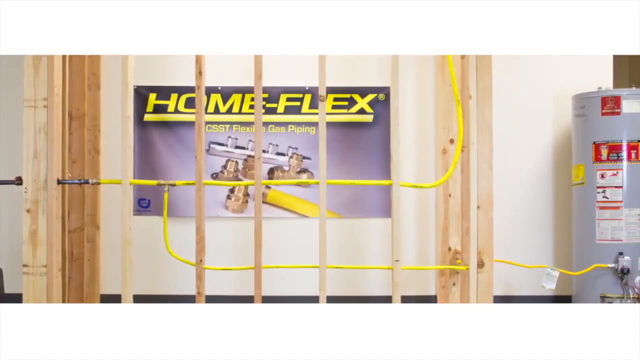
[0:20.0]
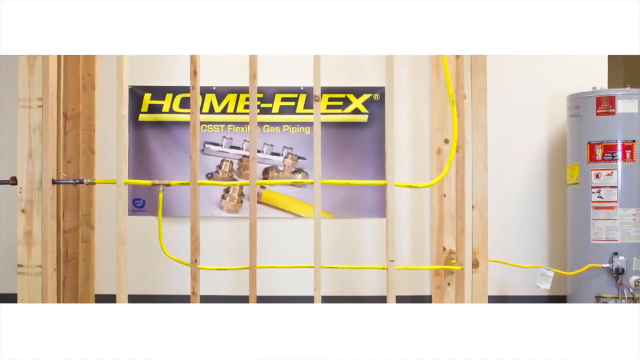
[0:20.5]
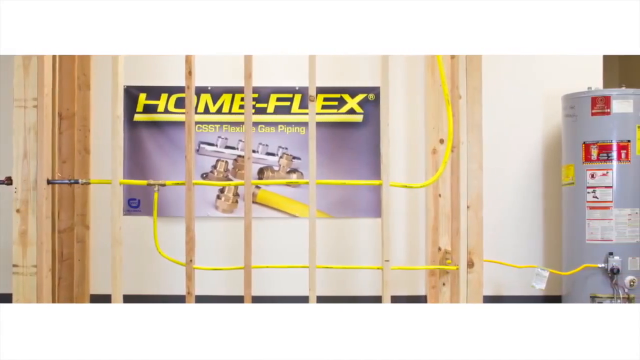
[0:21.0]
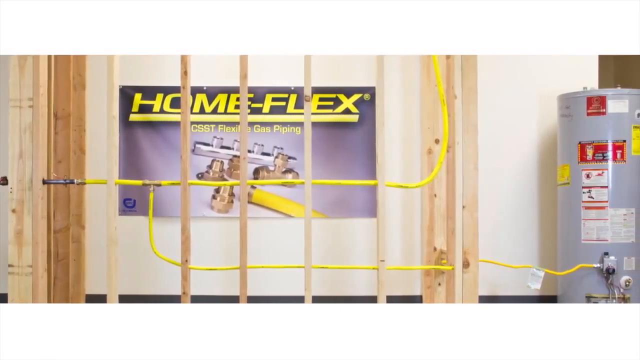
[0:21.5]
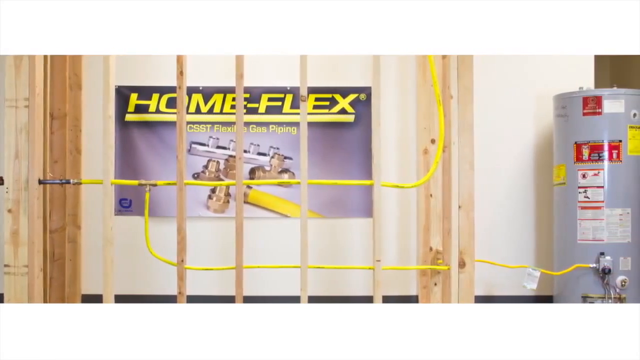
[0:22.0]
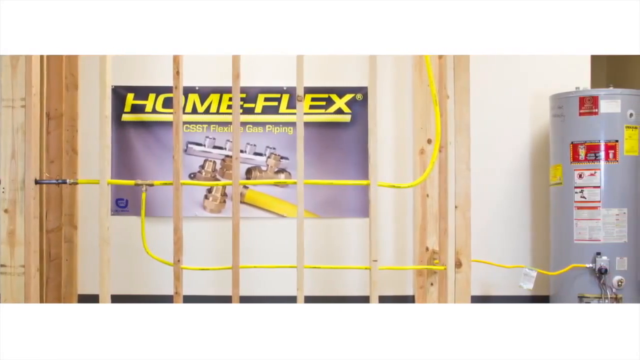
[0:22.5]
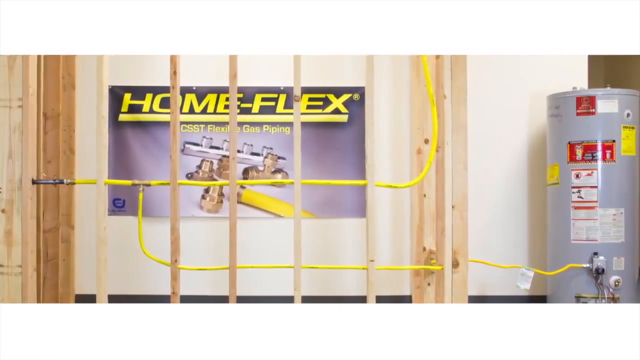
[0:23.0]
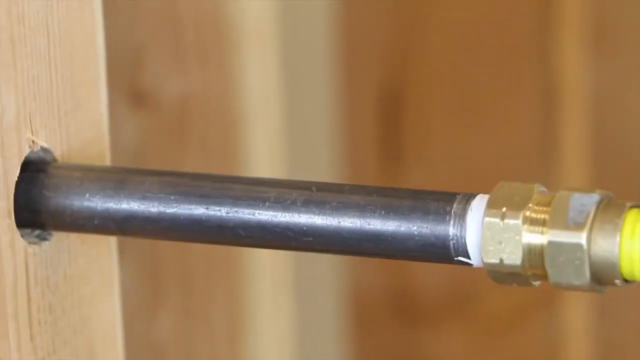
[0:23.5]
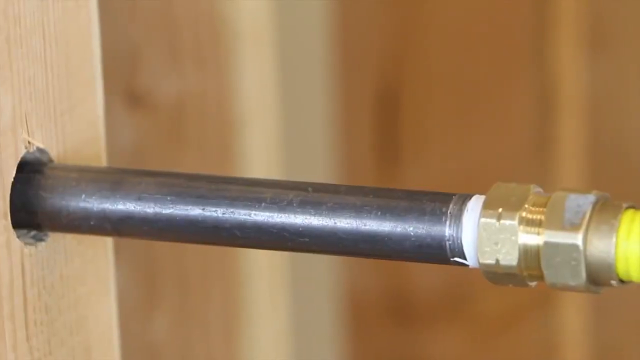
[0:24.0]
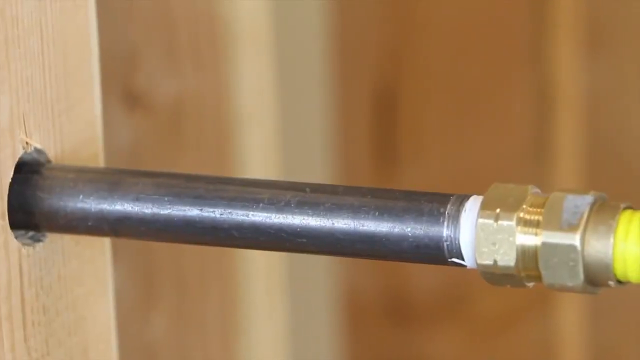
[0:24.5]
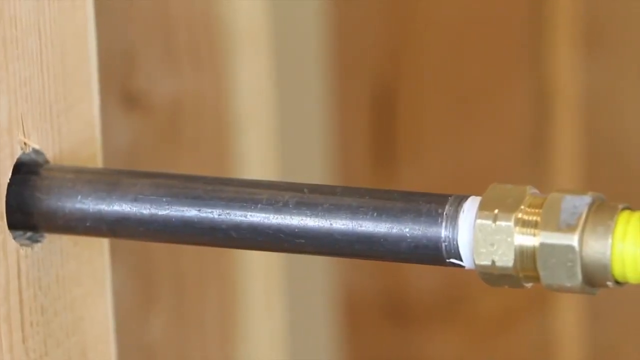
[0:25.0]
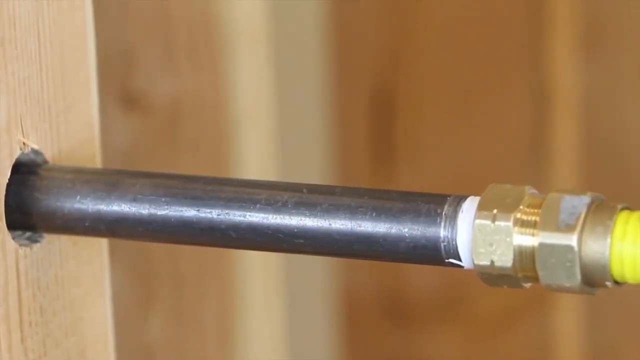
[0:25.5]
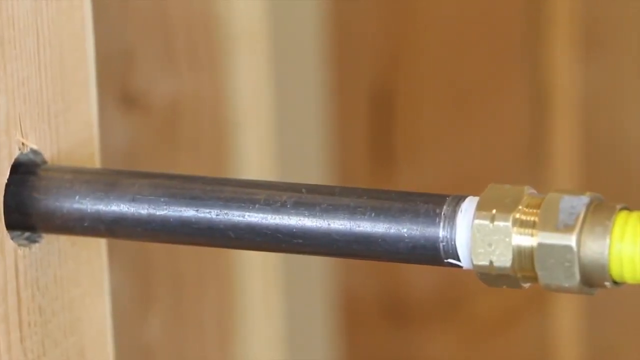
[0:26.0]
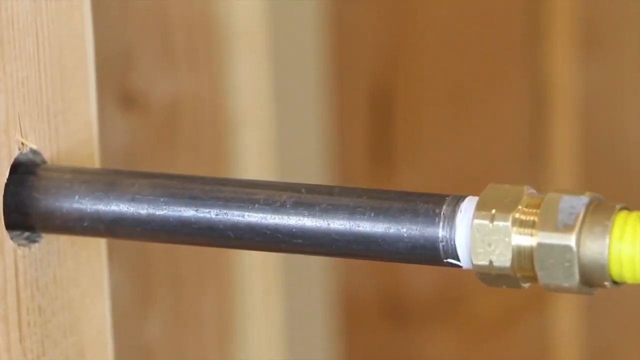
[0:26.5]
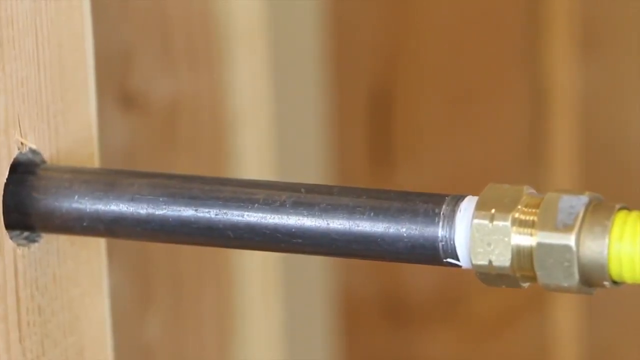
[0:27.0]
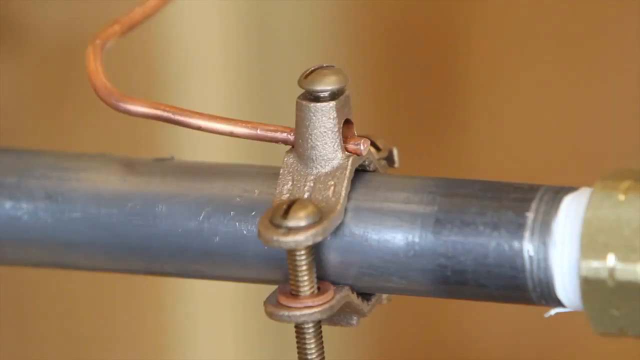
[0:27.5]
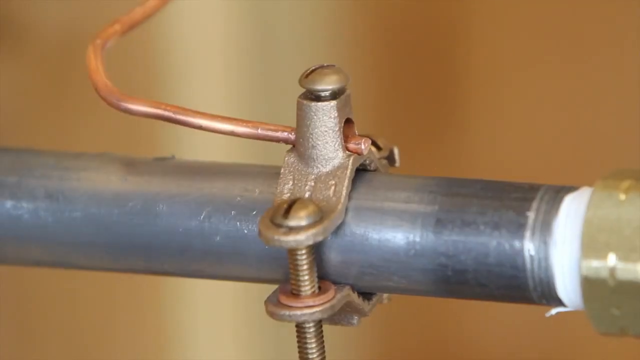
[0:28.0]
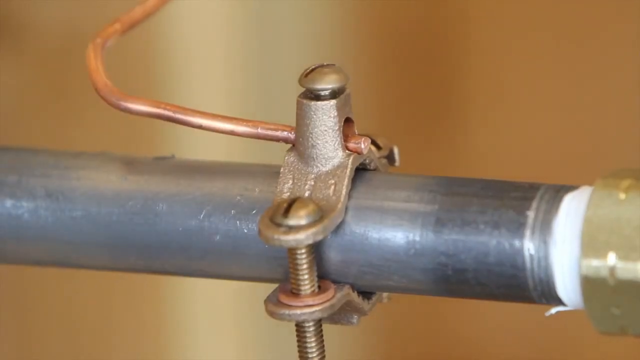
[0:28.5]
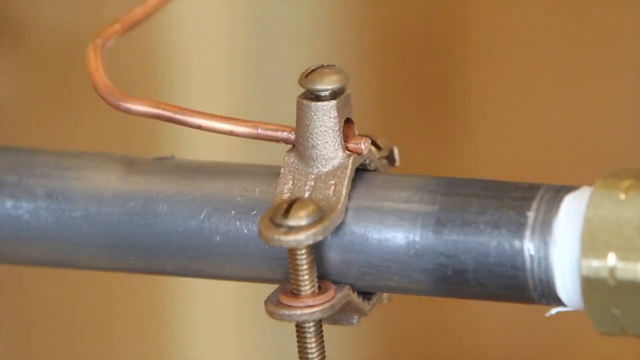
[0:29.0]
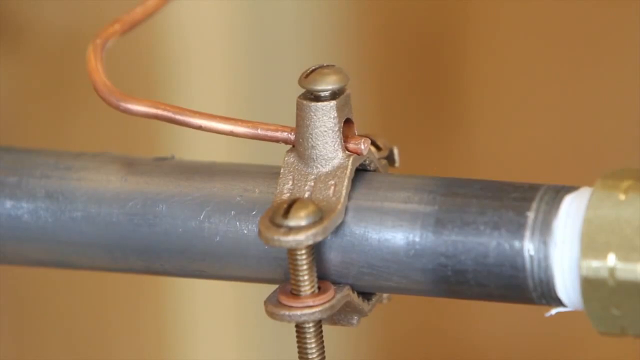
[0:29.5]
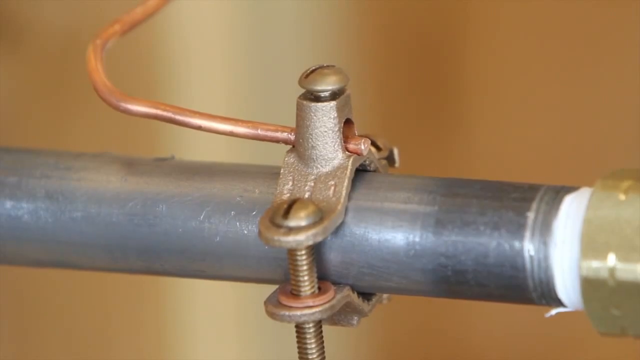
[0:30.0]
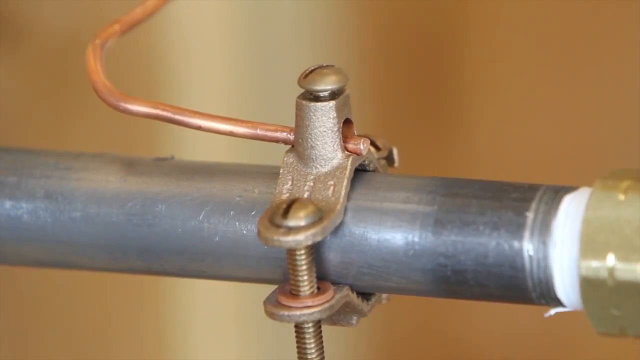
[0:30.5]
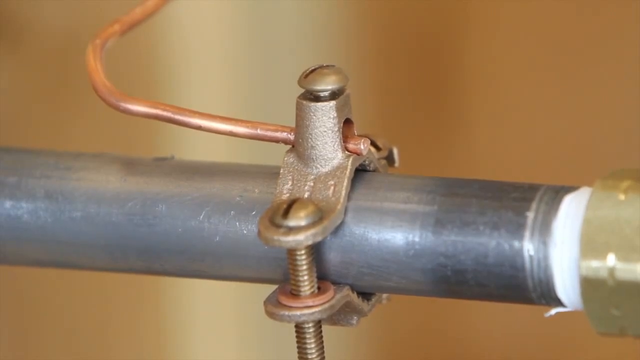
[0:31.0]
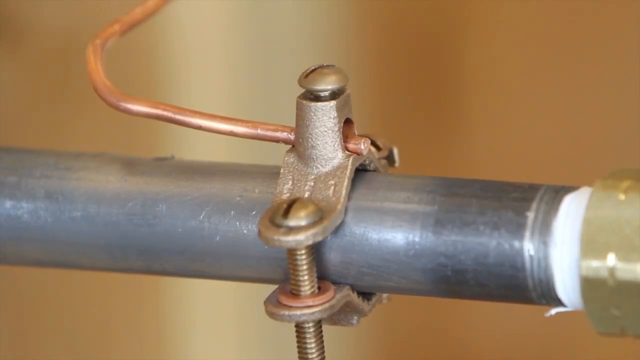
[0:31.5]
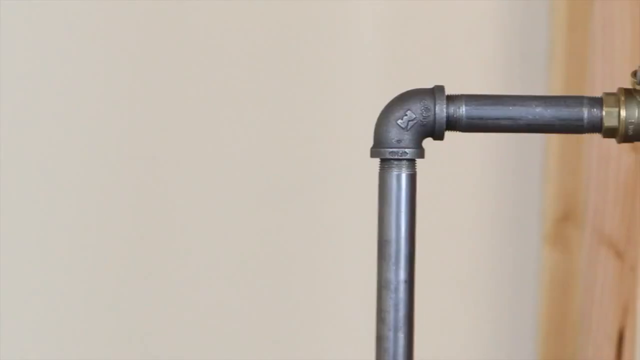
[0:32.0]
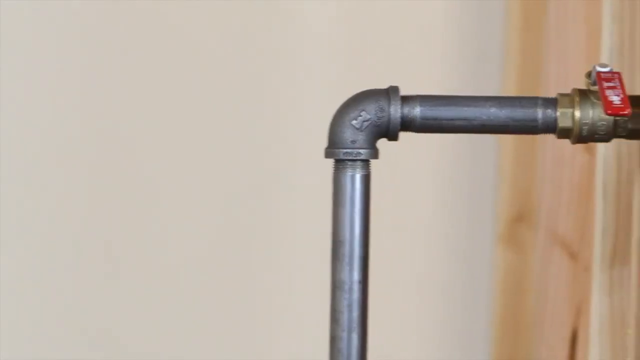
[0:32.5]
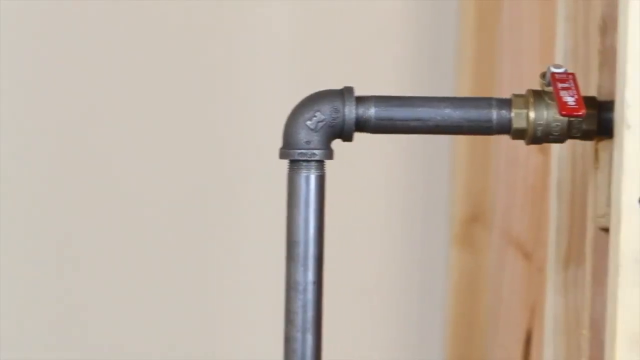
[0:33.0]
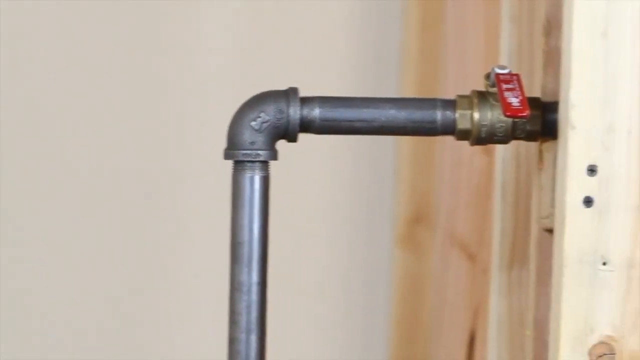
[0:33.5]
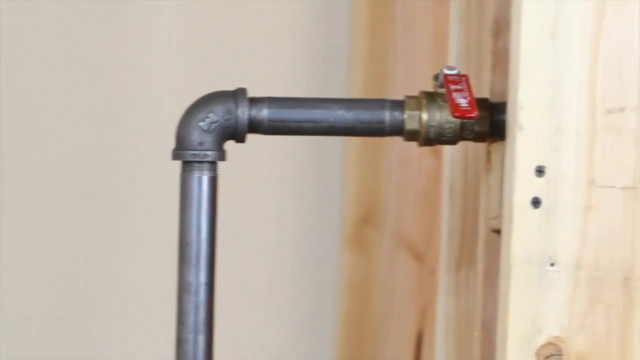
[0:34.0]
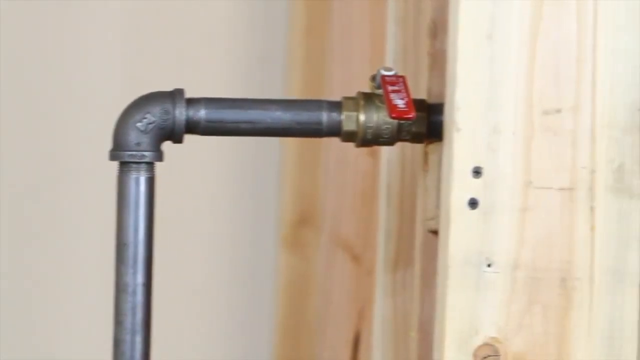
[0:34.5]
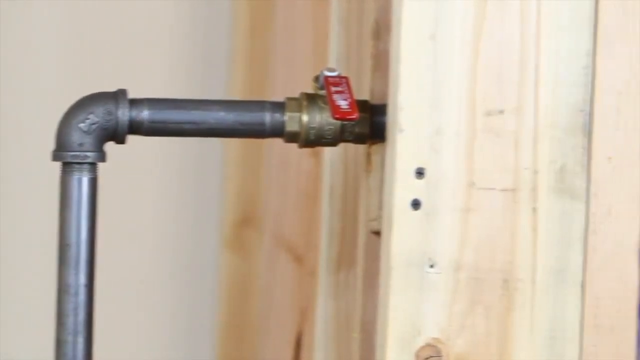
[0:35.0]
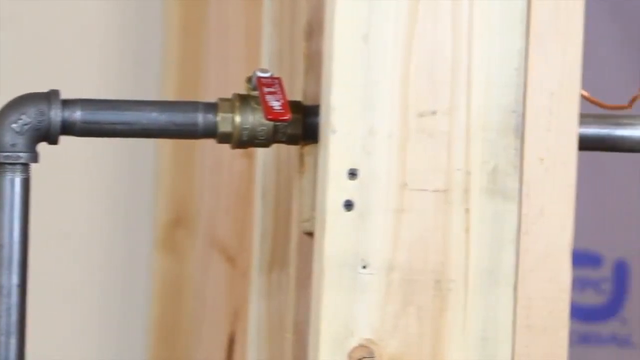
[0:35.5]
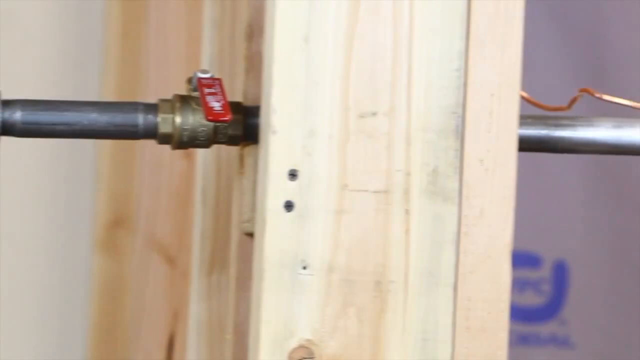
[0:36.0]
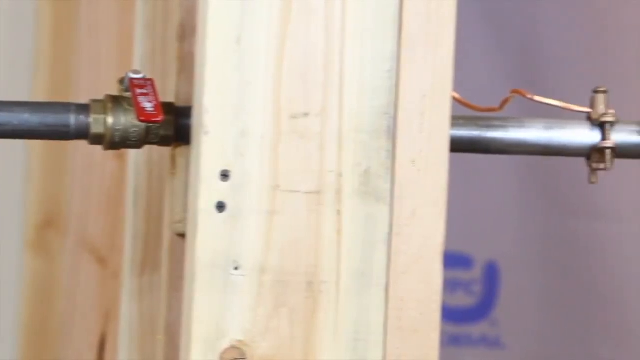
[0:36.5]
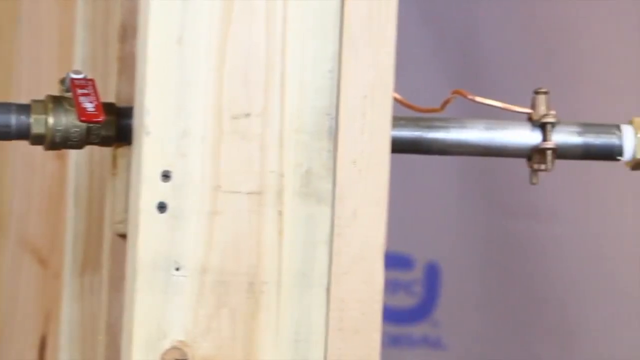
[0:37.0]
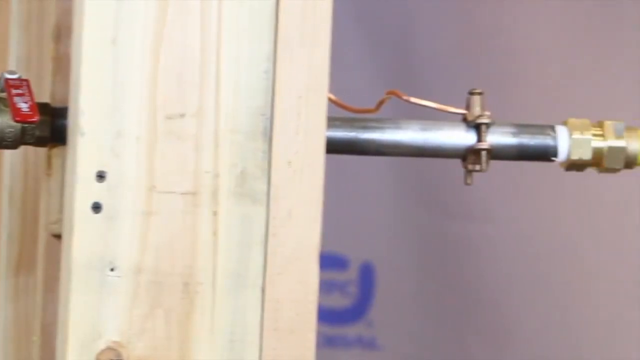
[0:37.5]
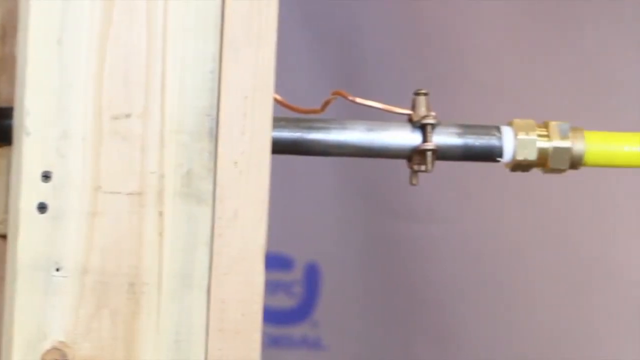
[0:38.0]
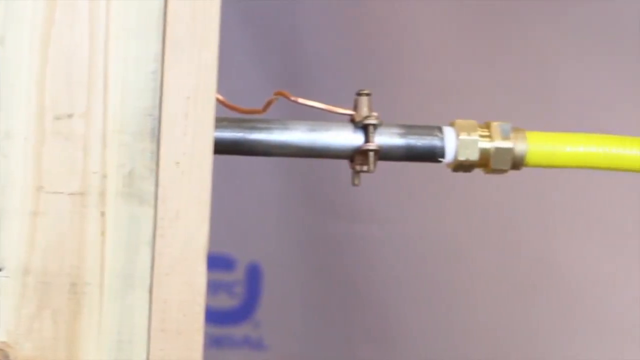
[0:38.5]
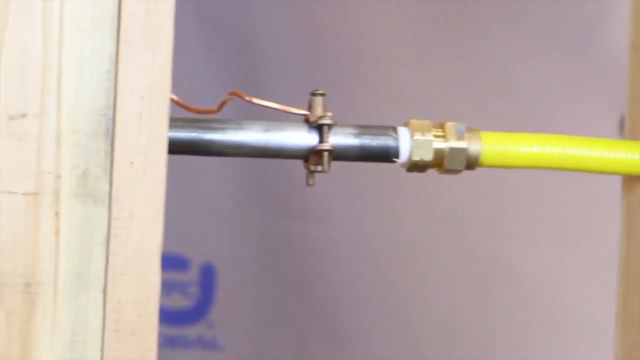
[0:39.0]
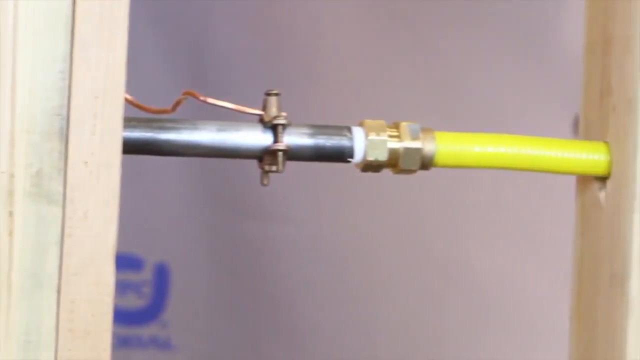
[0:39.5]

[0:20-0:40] The camera keeps panning right past the wood structure. The wood beams of some sort are vertical and take up the entire frame, almost as if they run from the floor up to the ceiling, spaced maybe every couple of feet. Another wood beam comes into view as the pan continues. The yellow hose eventually connects to the water heater. In a close-up, a wood beam on the left has a hole in it with a metal pipe going through, and a gold connector of some sort looks like it will connect the yellow tube to the pipe. The camera slowly pans right. A different close-up angle of the pipe shows gold screws and a clamp of some sort around it, with a copper wire going into the clamp; the view holds on this for a few seconds. Another angle shows pipes forming 90-degree angles: a vertical section curves and then runs parallel, connecting into one of the wood beams. The camera pans right to the other side of the wood beam, where the pipe comes out and the connection to the yellow hose of some sort is visible.